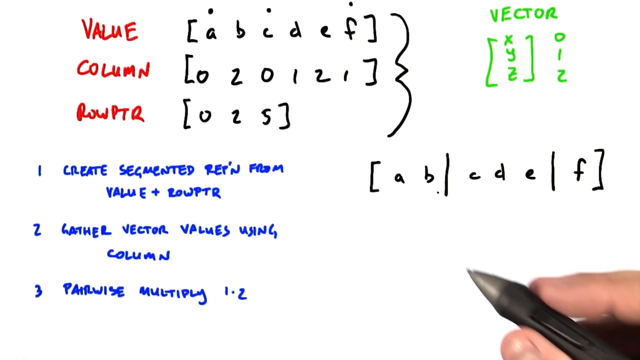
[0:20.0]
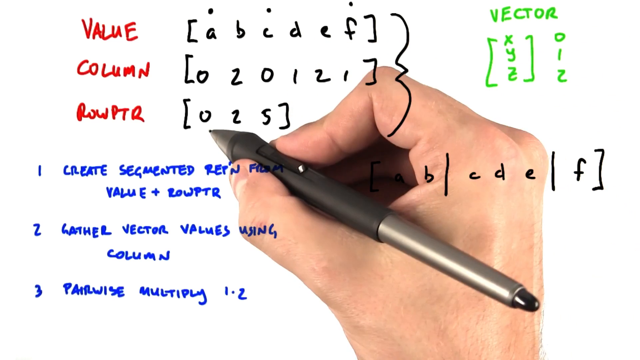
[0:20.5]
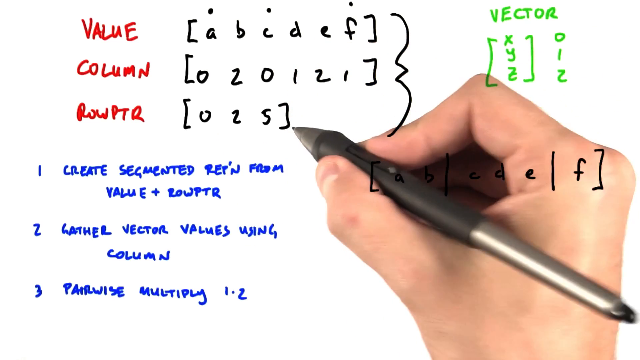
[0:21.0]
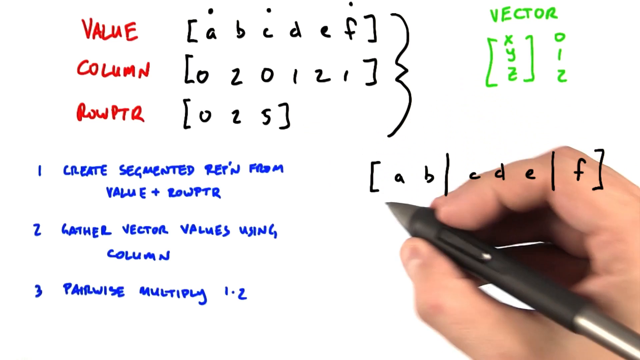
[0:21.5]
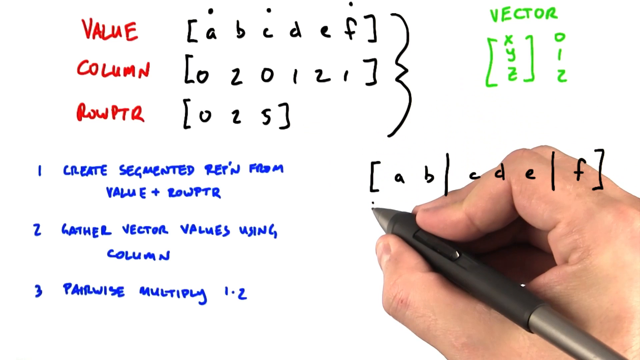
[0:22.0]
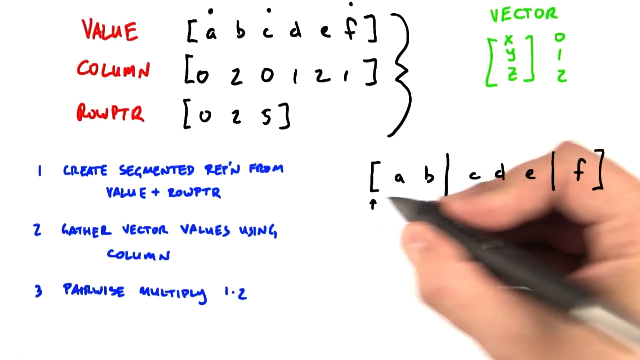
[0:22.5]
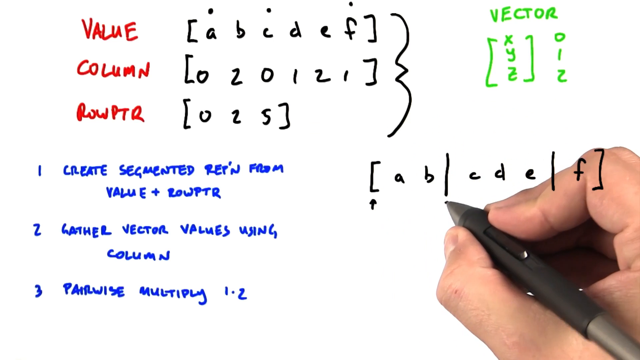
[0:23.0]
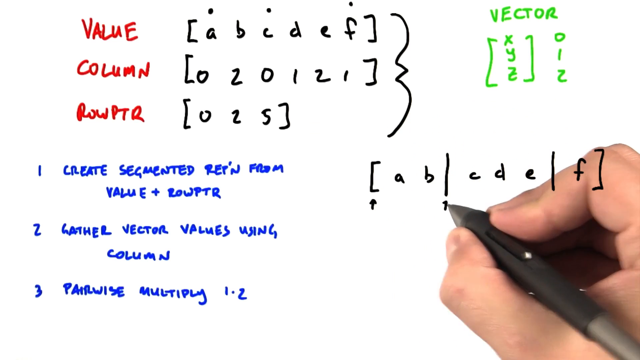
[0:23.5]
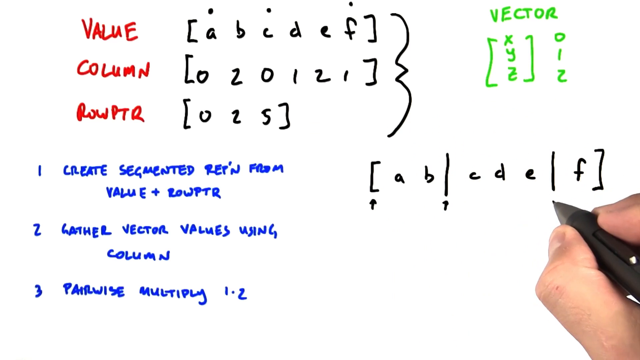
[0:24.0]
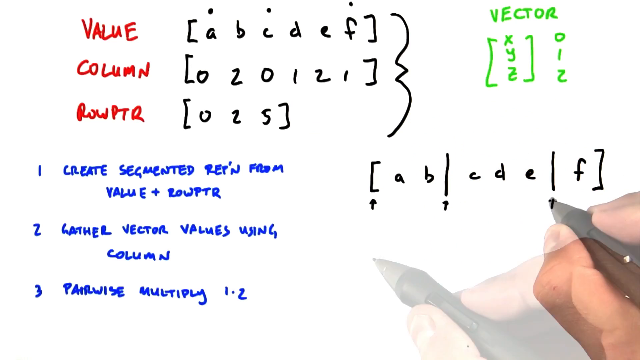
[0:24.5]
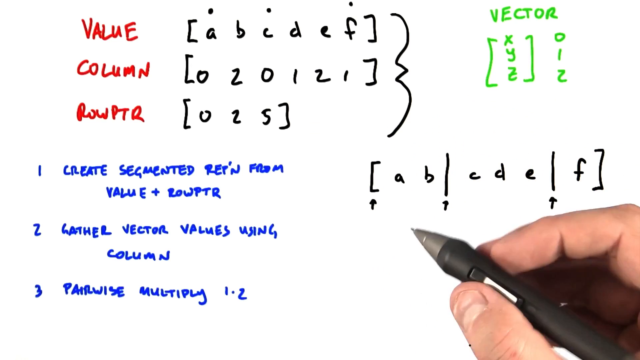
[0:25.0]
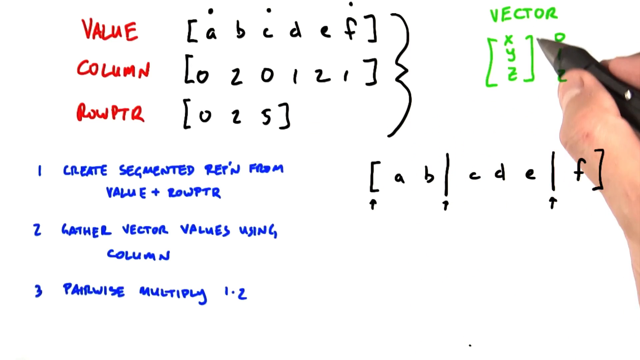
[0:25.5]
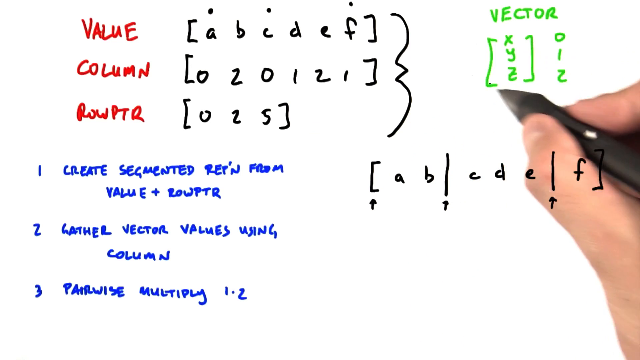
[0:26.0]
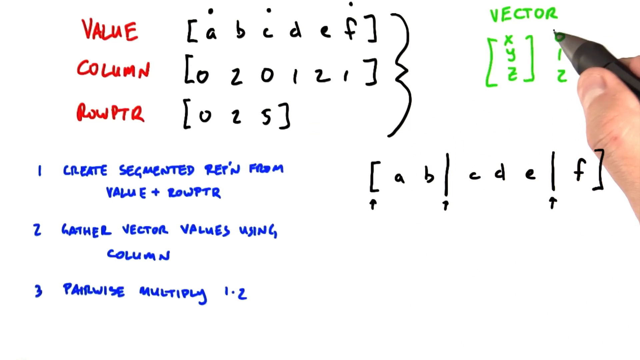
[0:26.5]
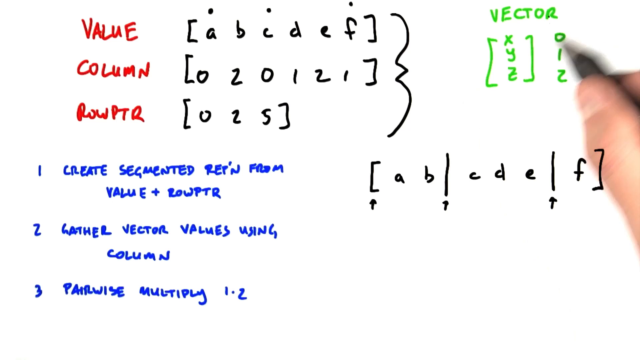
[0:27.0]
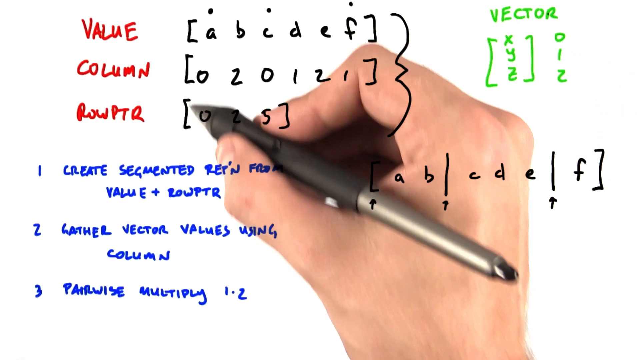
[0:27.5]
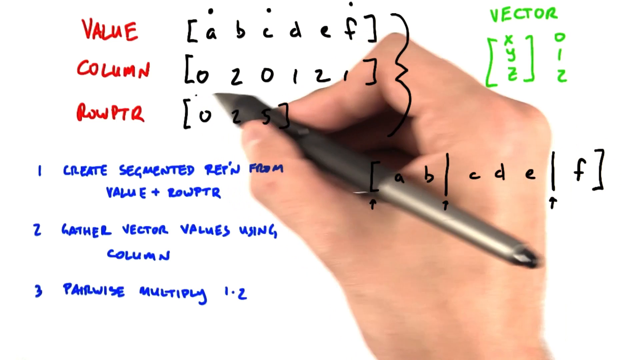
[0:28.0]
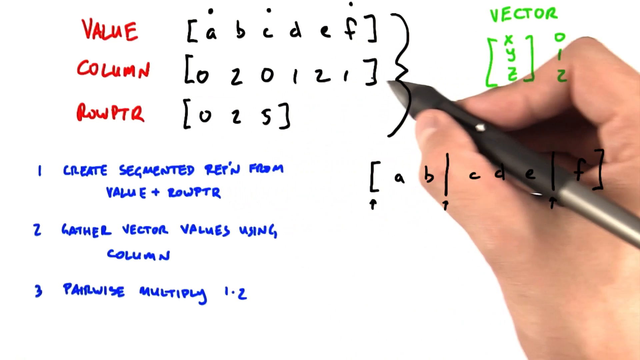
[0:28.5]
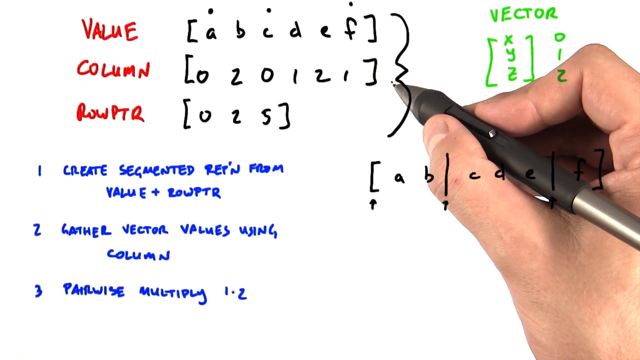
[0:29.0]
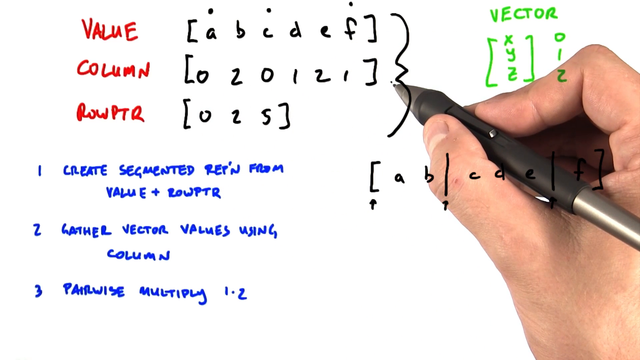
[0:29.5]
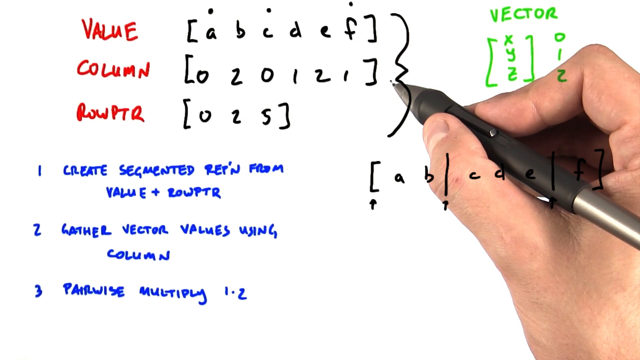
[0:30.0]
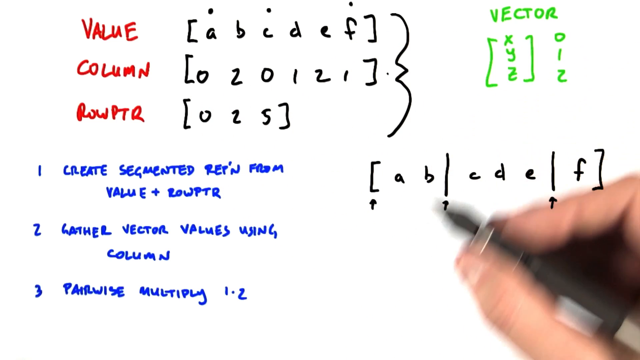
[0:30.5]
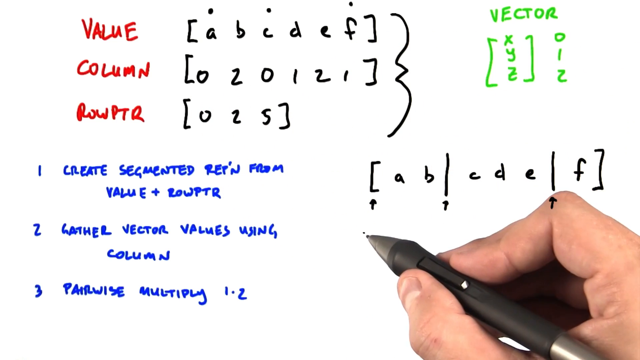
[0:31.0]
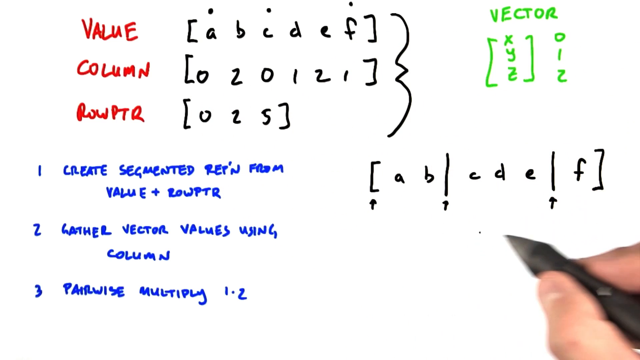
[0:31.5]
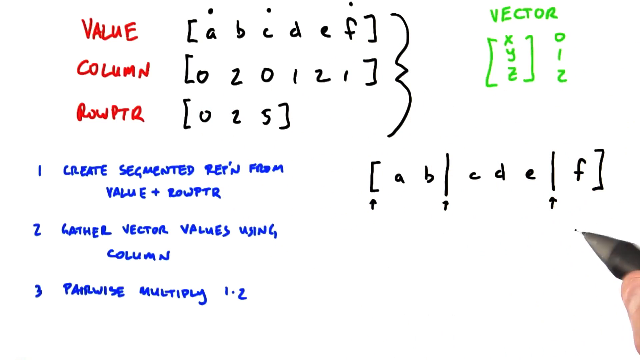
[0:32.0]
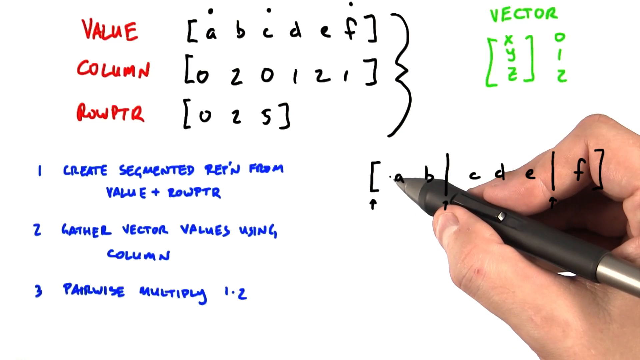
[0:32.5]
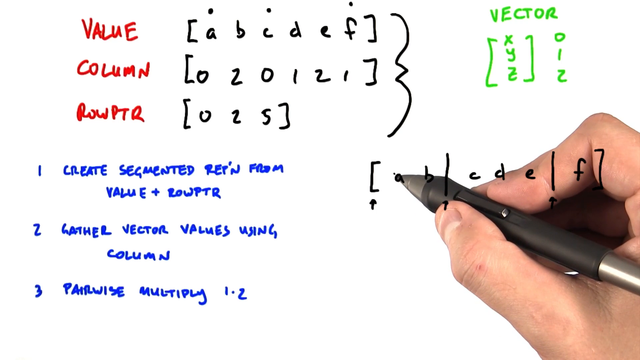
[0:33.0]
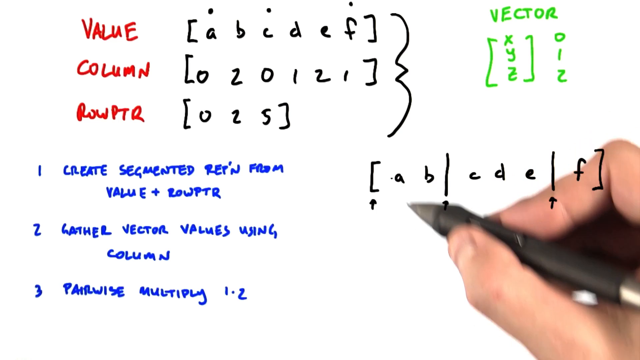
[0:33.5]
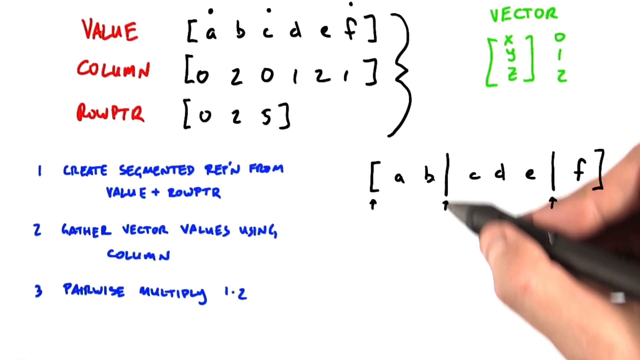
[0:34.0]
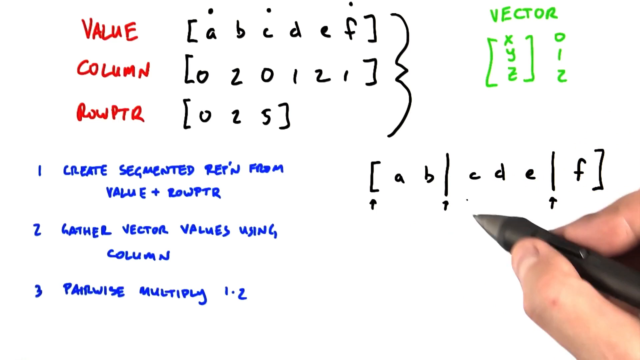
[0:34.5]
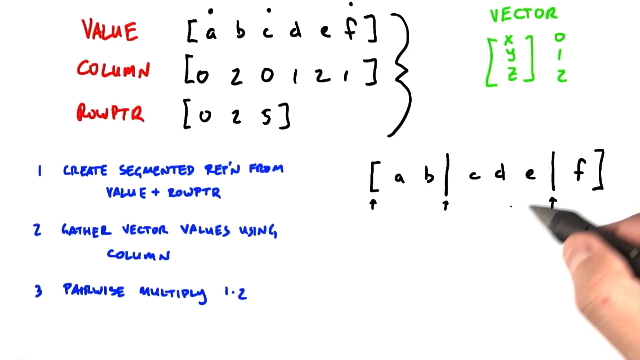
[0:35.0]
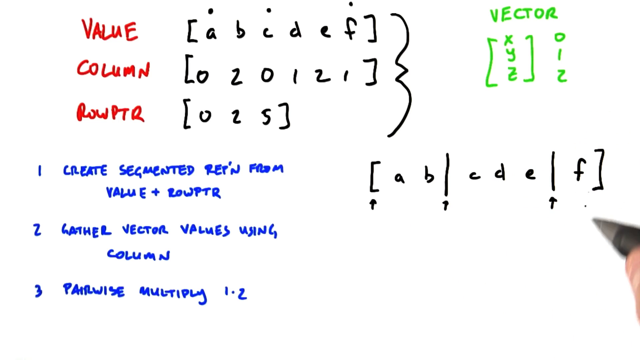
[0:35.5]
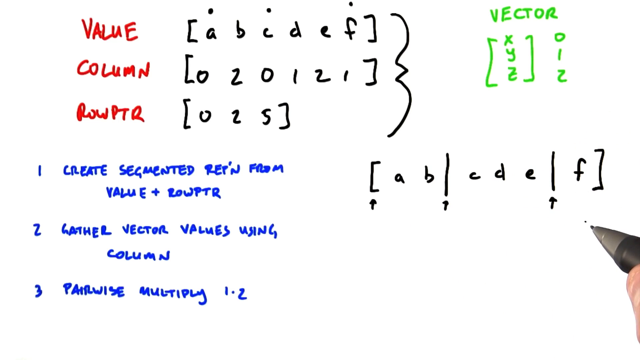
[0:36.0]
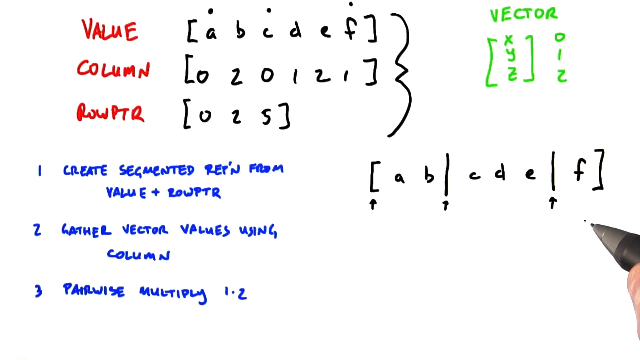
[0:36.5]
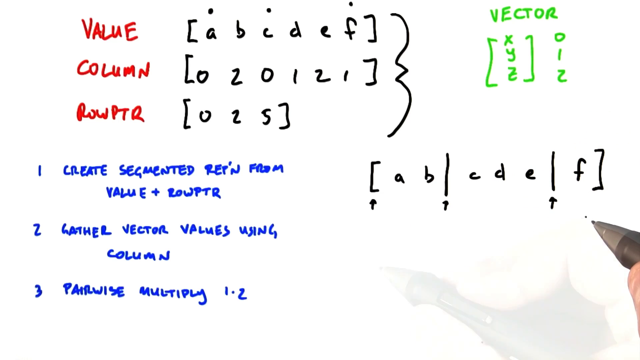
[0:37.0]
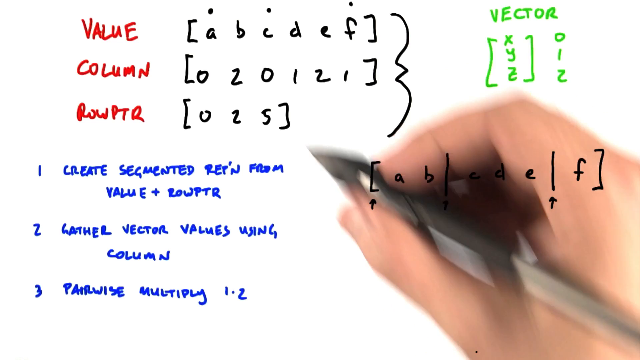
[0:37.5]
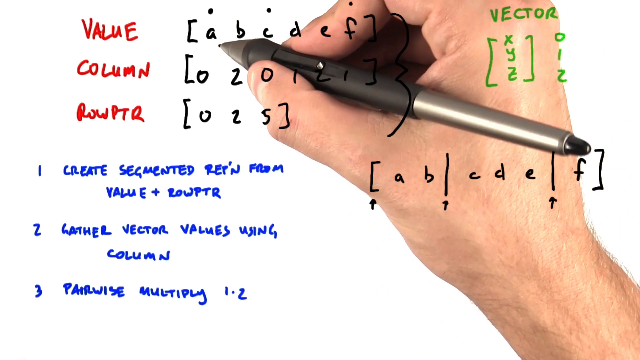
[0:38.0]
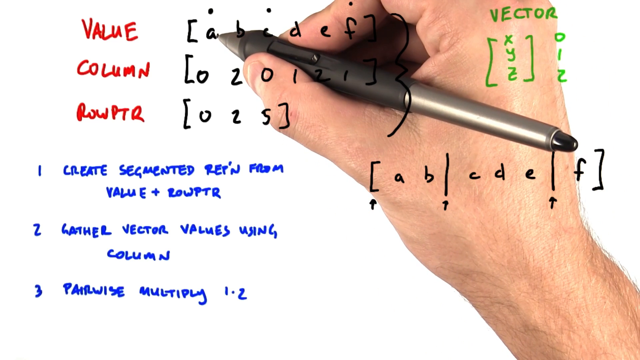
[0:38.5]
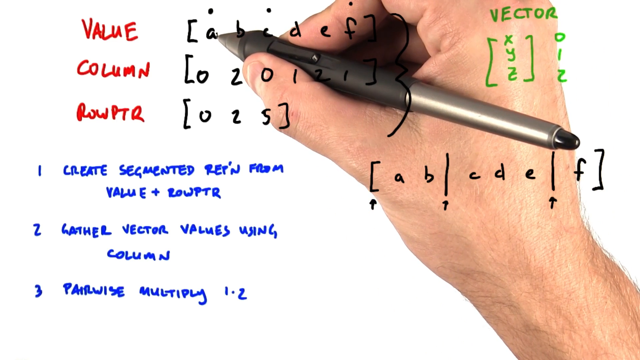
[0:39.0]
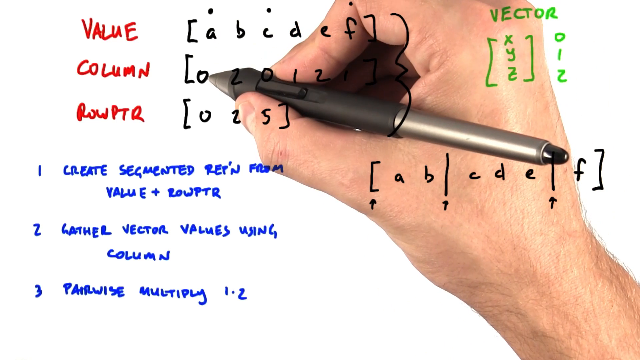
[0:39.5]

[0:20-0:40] Mathematical setups fill the screen. On the left side, three labels are written in red: Value, Column, and Rowptr. Next to Value are A, B, C, D, E, F in parentheses. Next to Column are the numbers 0, 2, 0, 1, 2, 1 in parentheses. Next to Rowptr are the numbers 0 to 5 in parentheses. Directly underneath is a set of steps: step 1 says "create segmented rep'n from value plus rowptr," step 2 says "gather vector values using Column," and step 3 says to "pairwise multiply using number 1 times number 2." To the right of the three labels at the top is another mathematical setup written in green and labeled Vector. Under Vector, on the left, are the letters X, Y, Z in parentheses, with the numbers 0, 1, and 2 next to them. A right hand appears and writes with a pen, in brackets, a b segmented, followed by c d e segmented, followed by f. The hand draws arrows under each of the segments and points toward other values on the screen.